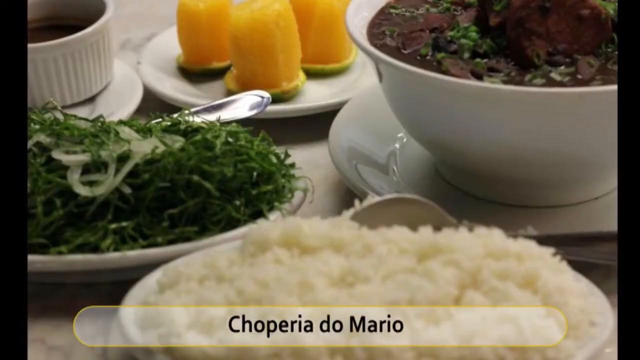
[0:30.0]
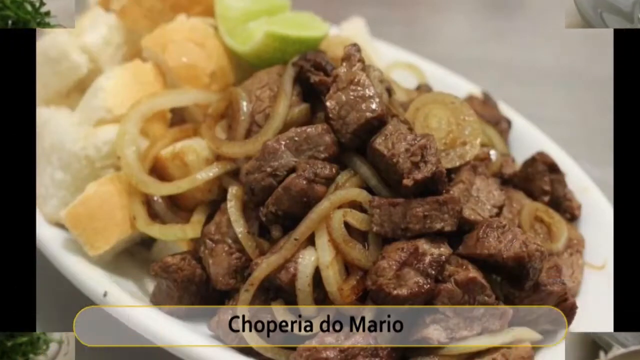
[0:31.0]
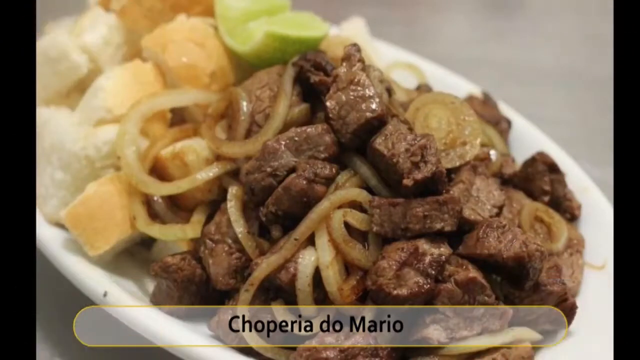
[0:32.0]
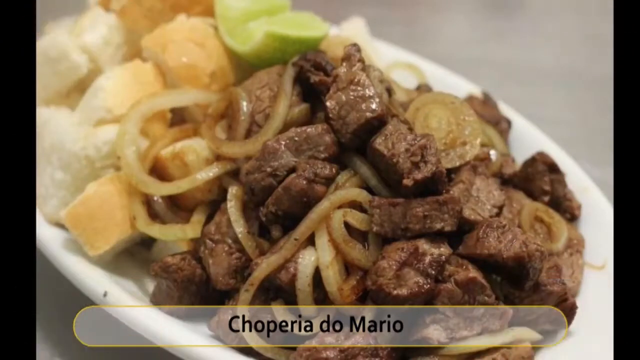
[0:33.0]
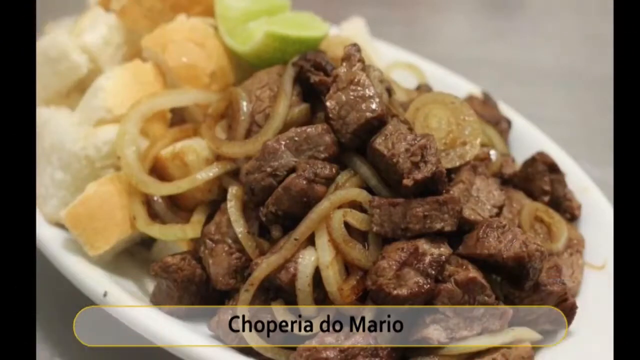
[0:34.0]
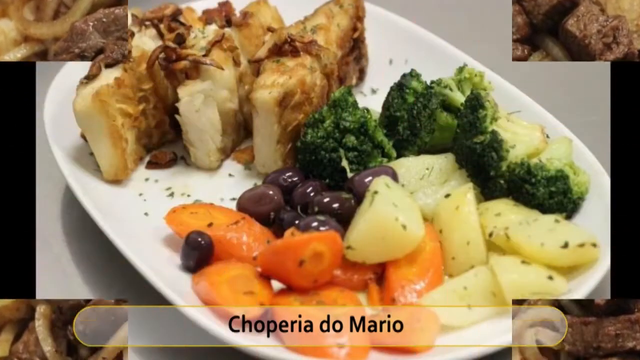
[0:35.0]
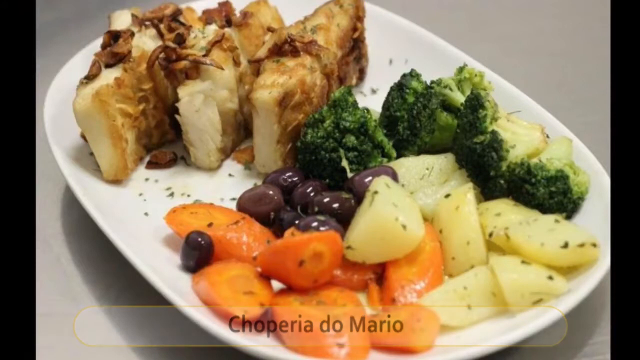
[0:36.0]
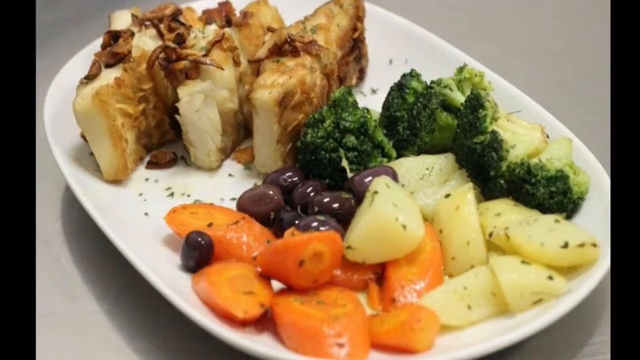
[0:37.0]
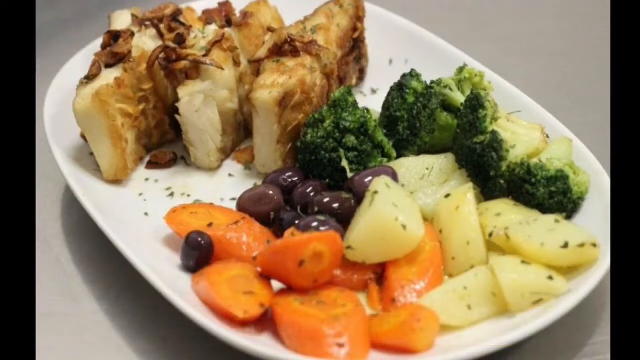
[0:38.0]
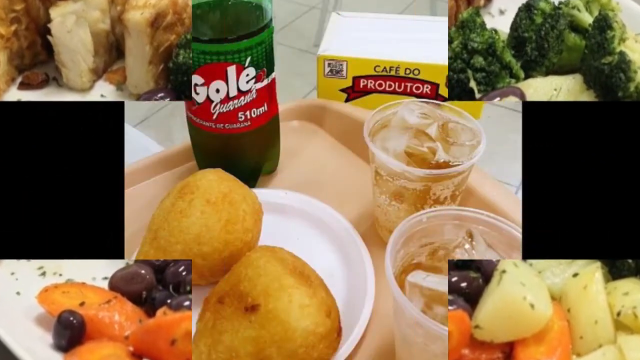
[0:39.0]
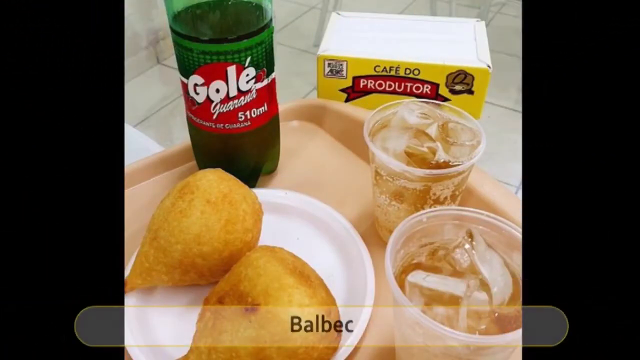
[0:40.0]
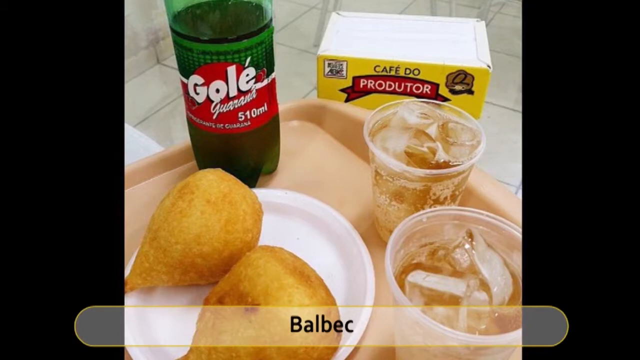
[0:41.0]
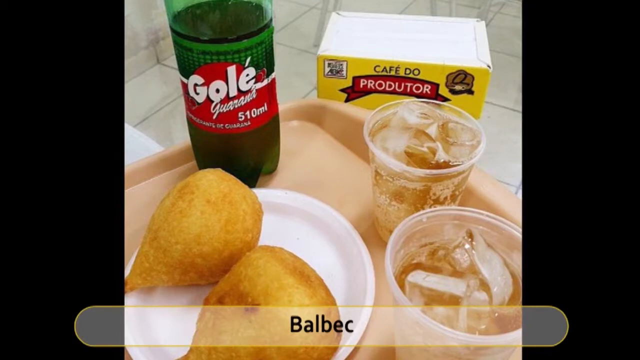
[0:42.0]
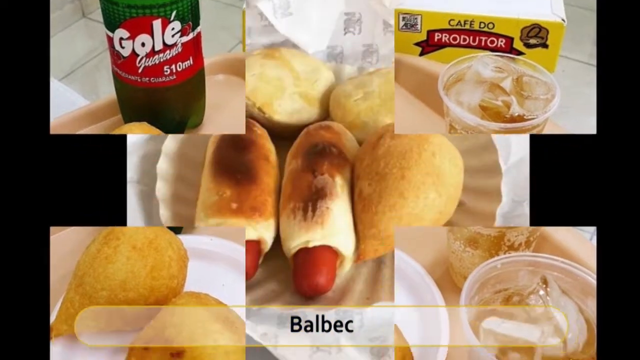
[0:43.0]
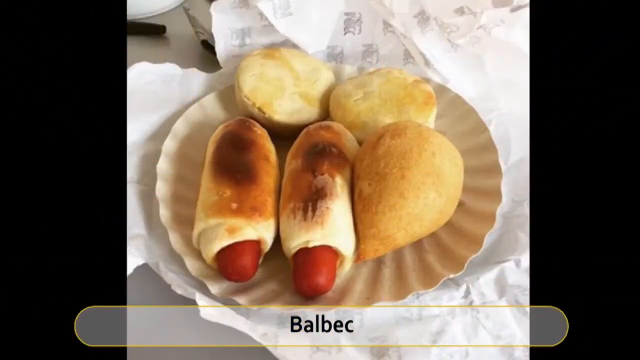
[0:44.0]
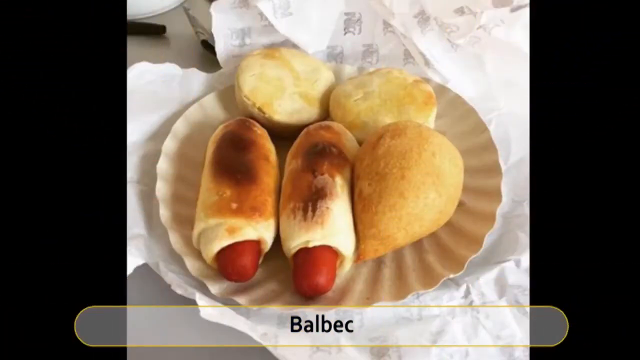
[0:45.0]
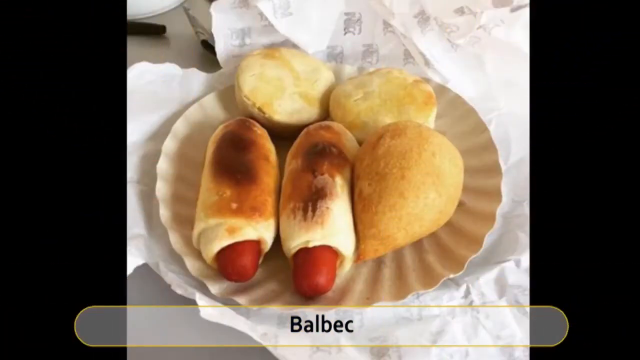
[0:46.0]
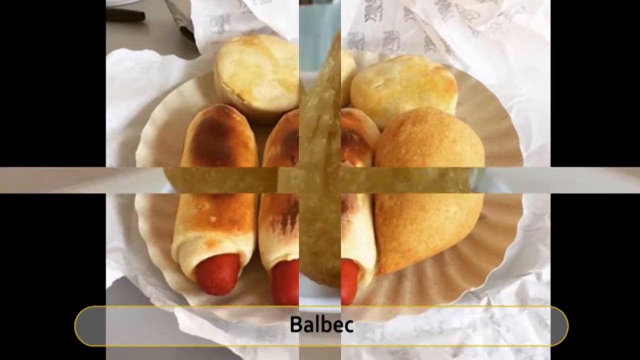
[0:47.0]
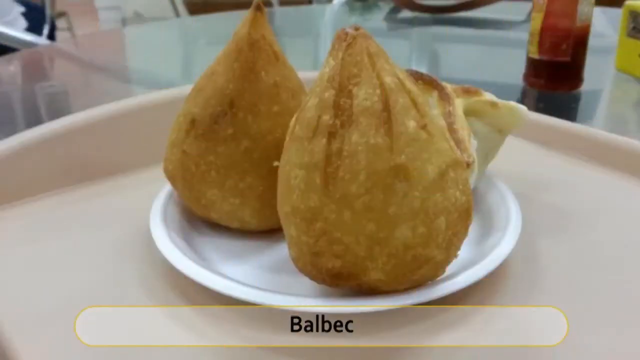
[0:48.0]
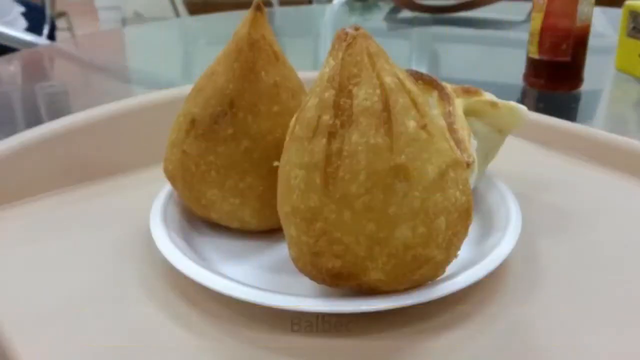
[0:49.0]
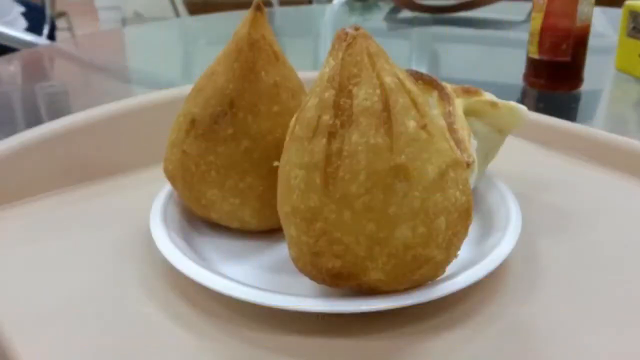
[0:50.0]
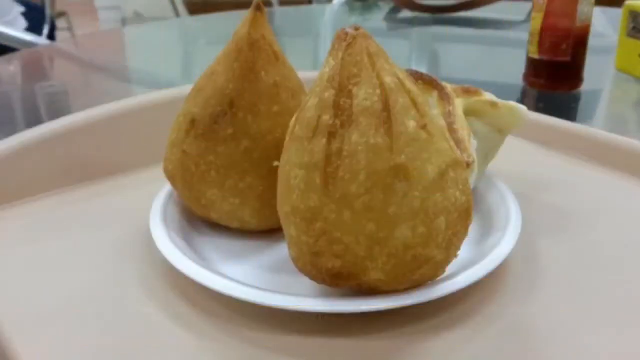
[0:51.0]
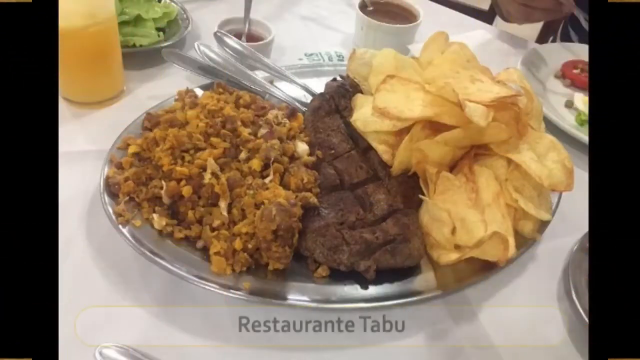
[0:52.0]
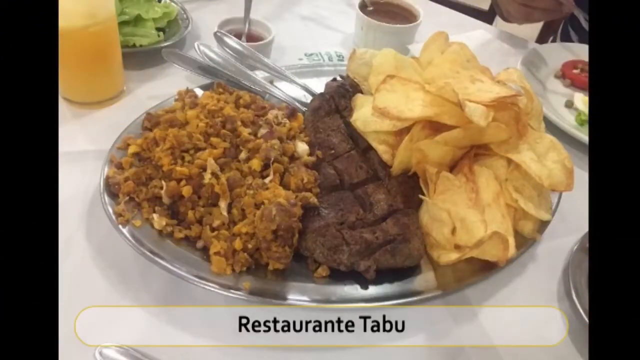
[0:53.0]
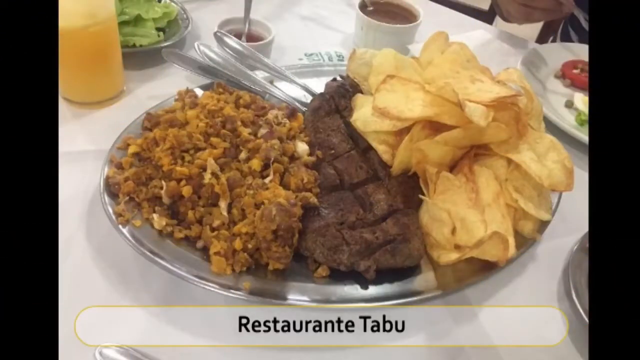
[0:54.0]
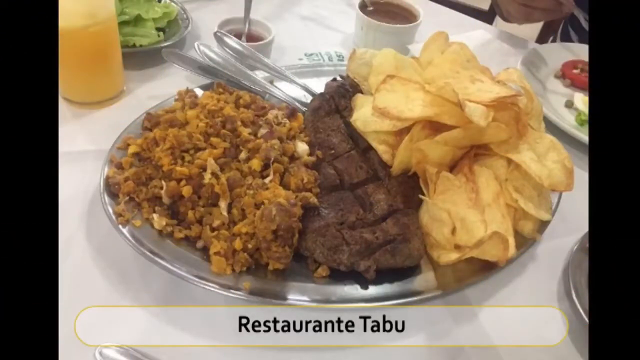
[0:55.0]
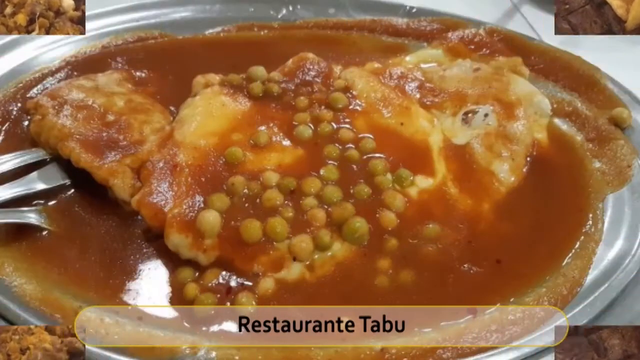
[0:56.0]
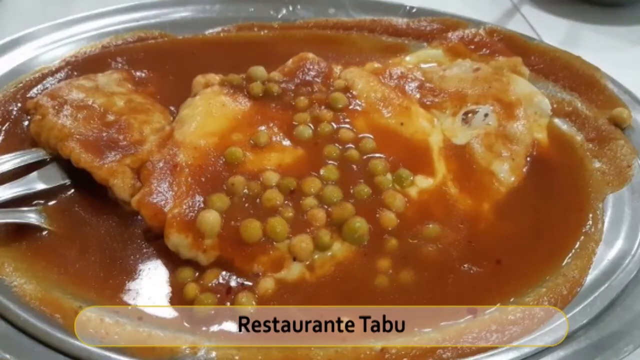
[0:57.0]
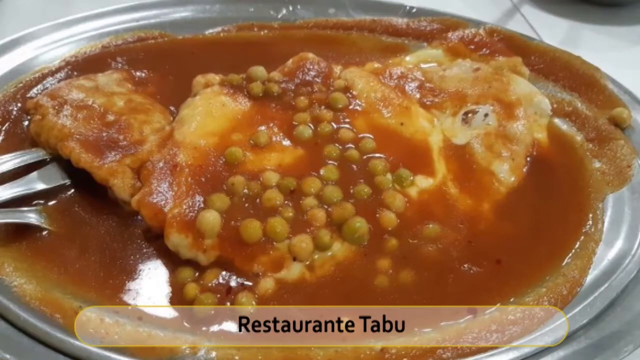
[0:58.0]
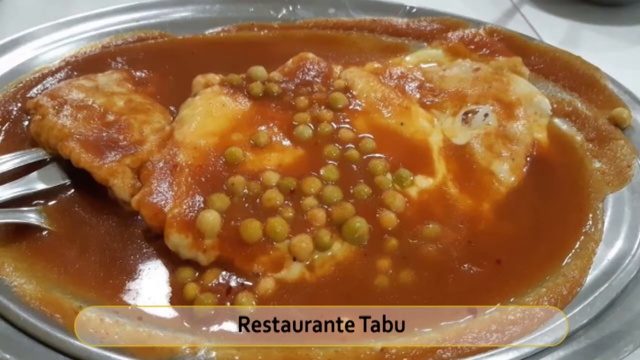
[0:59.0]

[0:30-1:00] A close-up view shows a table with multiple objects on it. After a transition, a close-up of a plate of food appears for a few seconds, followed by the same transition, which separates the image and pulls it from the left corner, from the right corner, and then from the bottom to the left and right corners. The plate is then shown half empty. After the same transition, a different tray of food appears. The tan tray holds two see-through cups of drink and, on a white plate, two items that look like fried chicken legs, next to an object with fluid in it. The other fluid container is green.